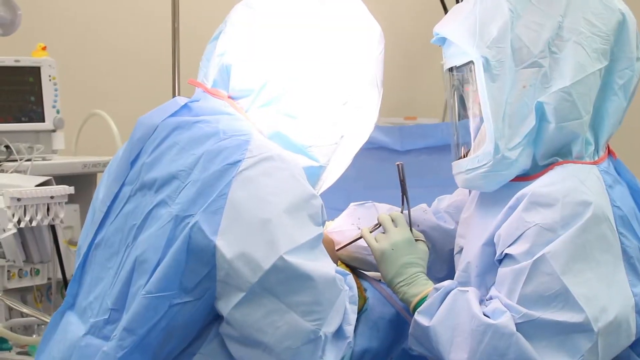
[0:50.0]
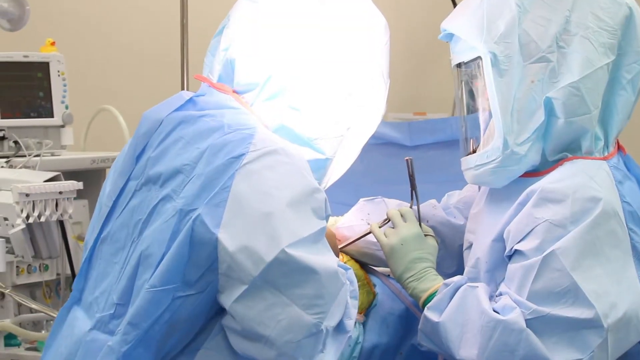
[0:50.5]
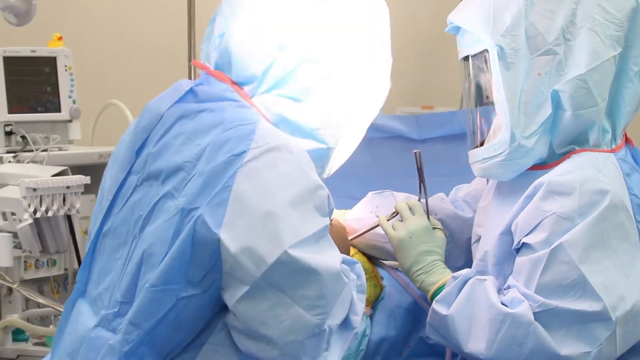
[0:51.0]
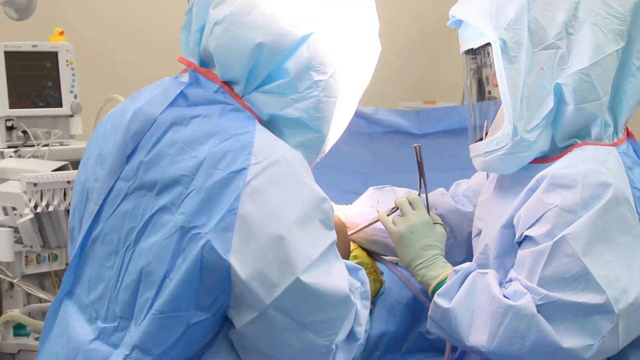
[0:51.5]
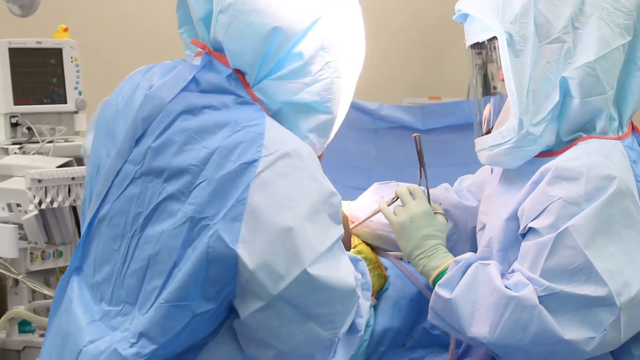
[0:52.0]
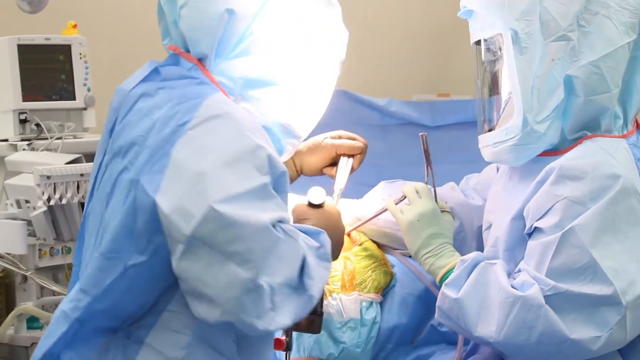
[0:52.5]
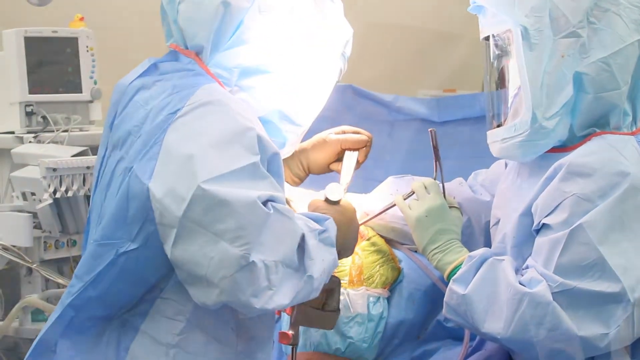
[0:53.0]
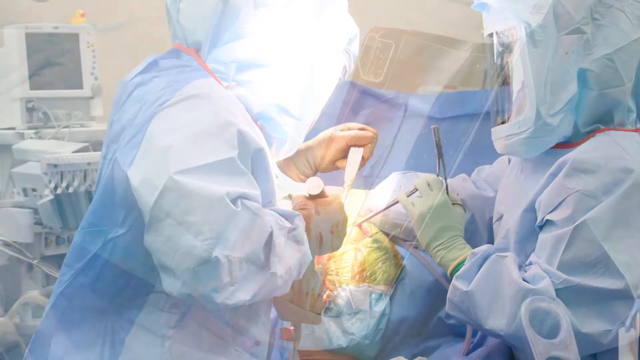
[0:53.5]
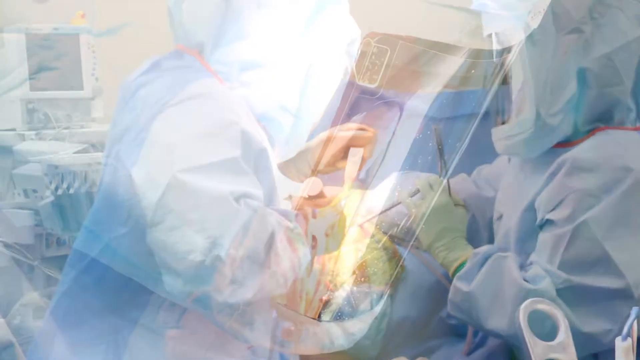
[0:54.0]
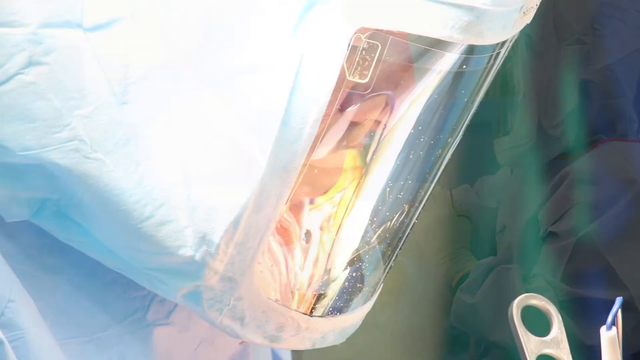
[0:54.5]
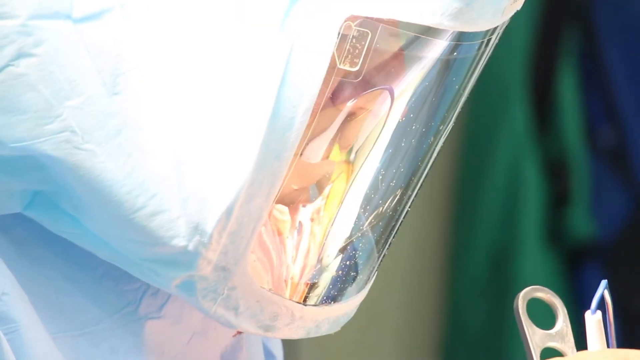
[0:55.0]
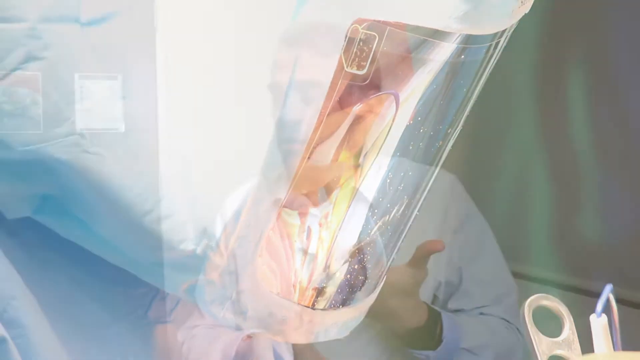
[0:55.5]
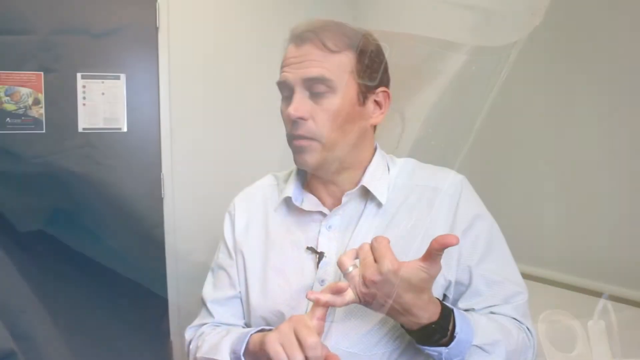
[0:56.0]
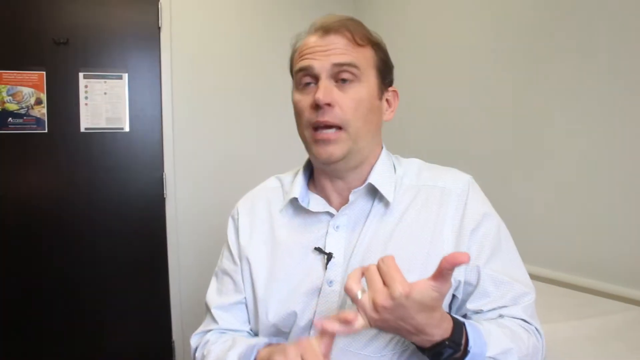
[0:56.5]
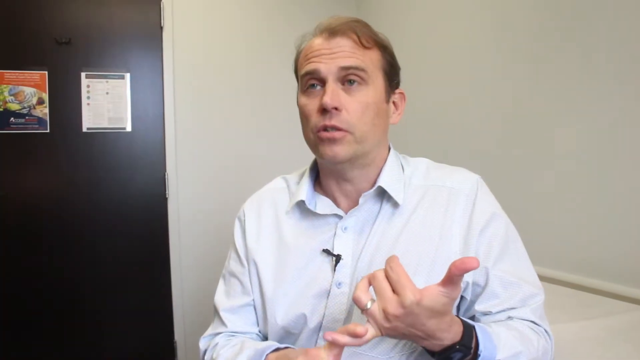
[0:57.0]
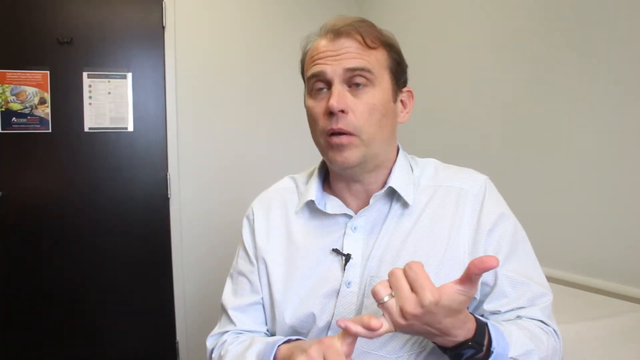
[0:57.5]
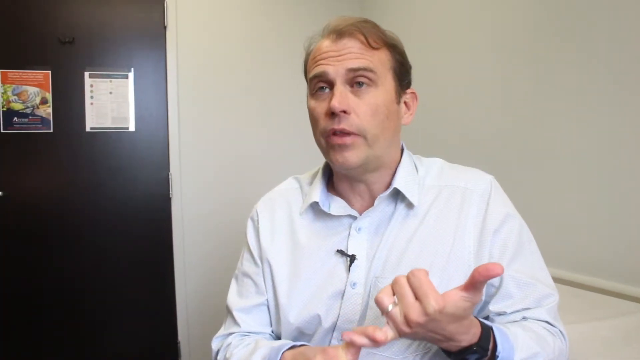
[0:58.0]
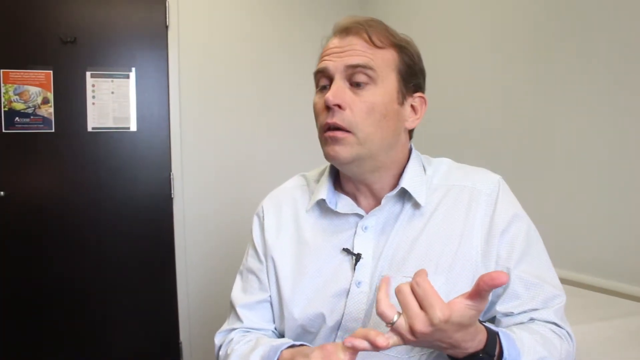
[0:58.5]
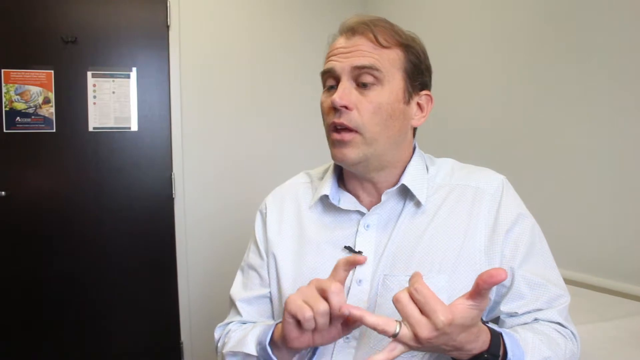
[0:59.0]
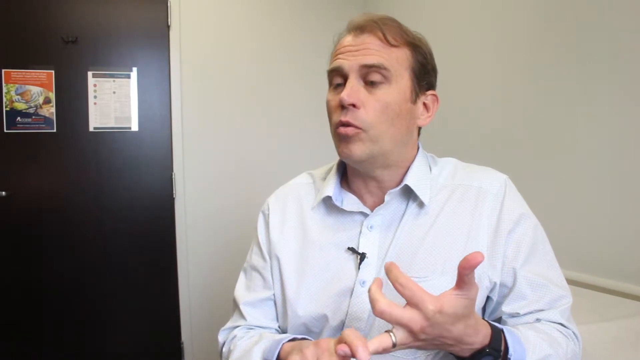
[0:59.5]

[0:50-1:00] One doctor is on the left and one on the right; the one on the right holds long forceps. Toward the left, a monitor and other hospital equipment are visible. Their faces cannot be seen because big round coverings are over their heads and plexiglass covers their faces. The doctor on the left has something in his right hand, the back of which is visible, while his left hand comes in, fingers toward the camera, holding something long and slender as they operate. The video cuts to a close-up of the face mask, then back to the man in front of the white wall, talking. His right hand is in front of him with a ring on his finger, the back of his fingers toward the camera and his thumb sticking out to the right. He looks down and taps a finger of his other hand on his pinky. The video cuts back to the operating room, then to another close-up of the face mask guard. The man still has his left pointer finger interlocked with his right pinky, thumb out to the right, nodding his head up and down and barely moving his fingers as he talks. He moves his pointer finger to the second finger and looks down to the left.